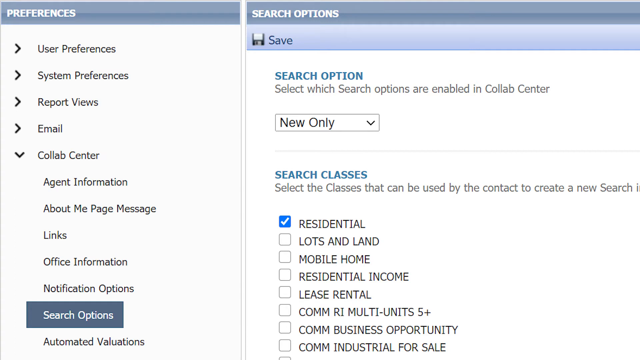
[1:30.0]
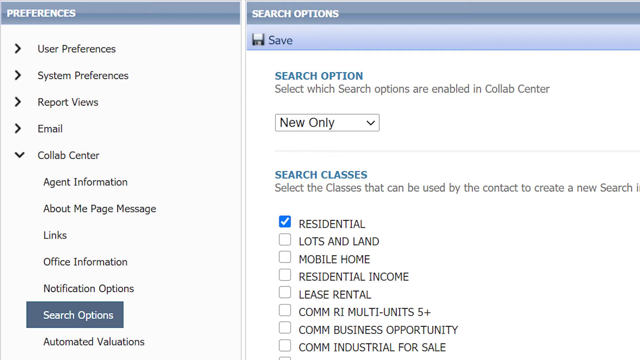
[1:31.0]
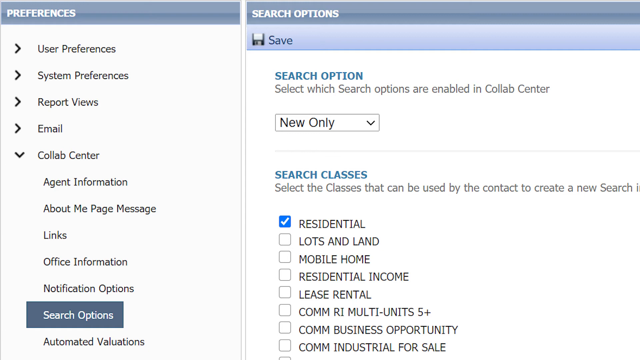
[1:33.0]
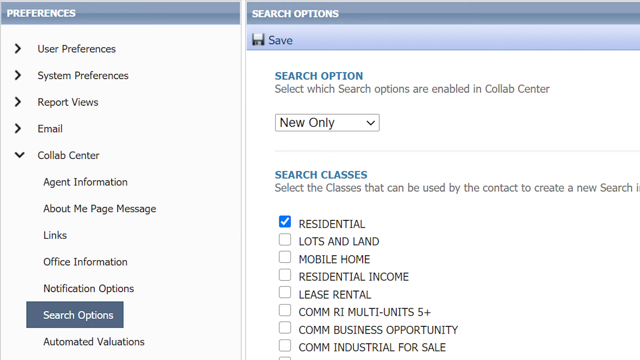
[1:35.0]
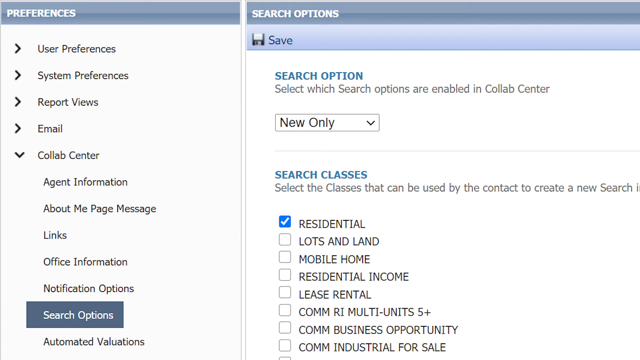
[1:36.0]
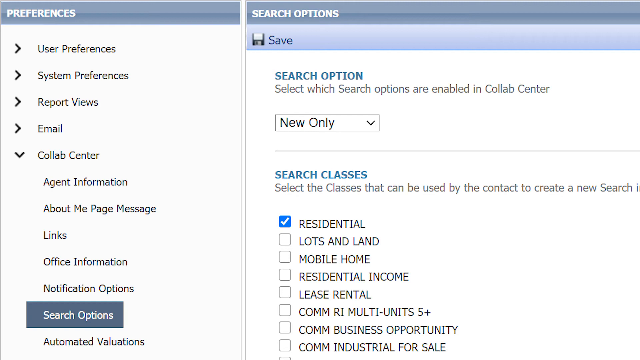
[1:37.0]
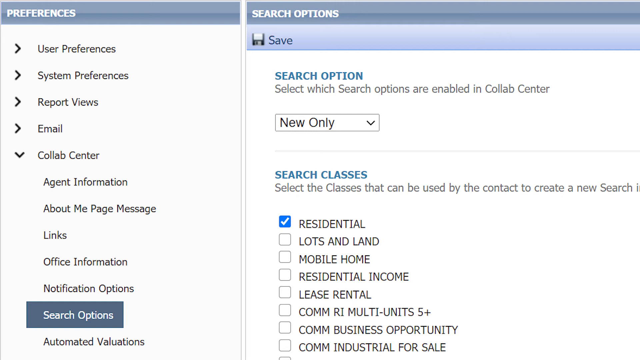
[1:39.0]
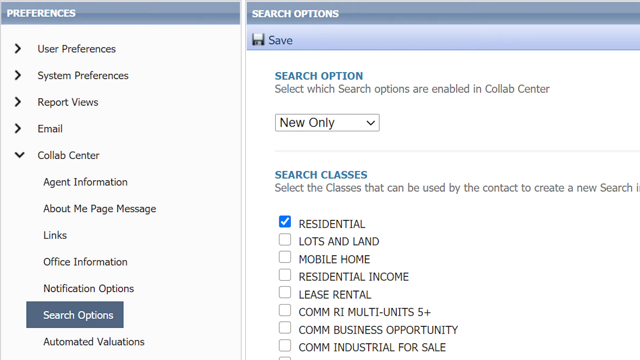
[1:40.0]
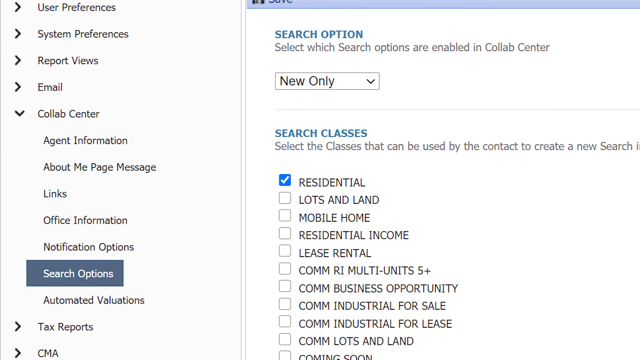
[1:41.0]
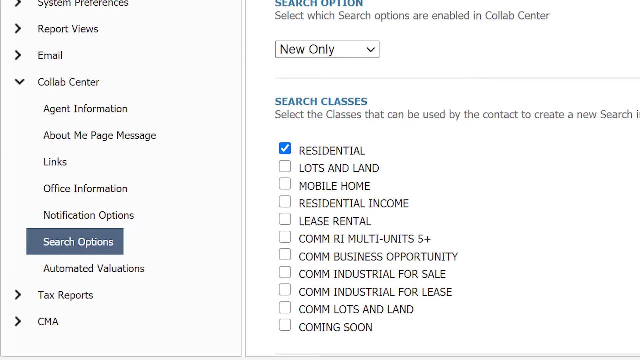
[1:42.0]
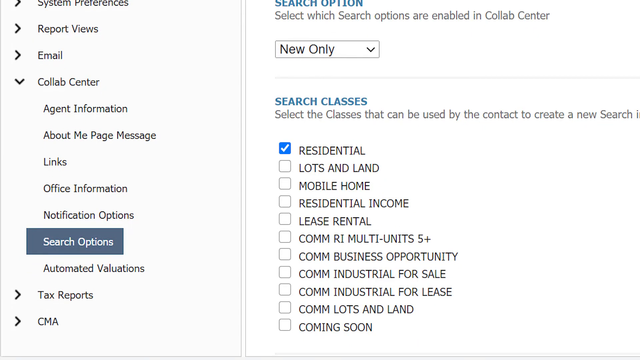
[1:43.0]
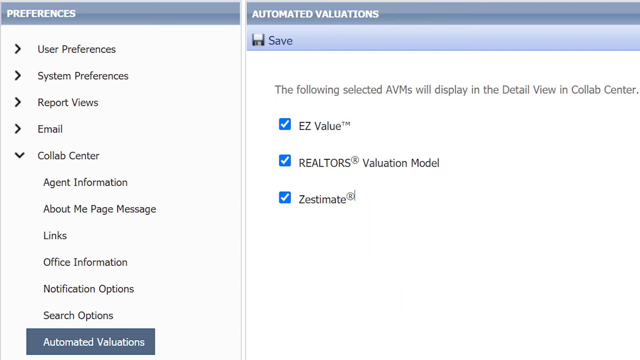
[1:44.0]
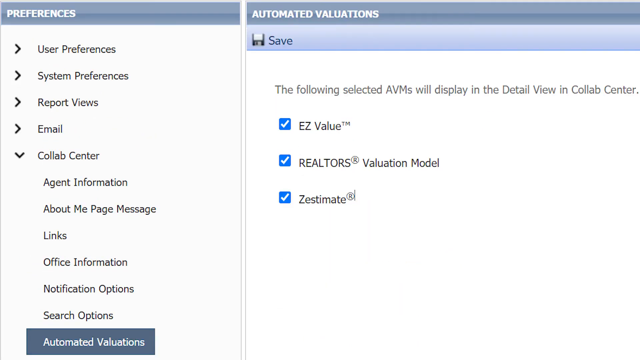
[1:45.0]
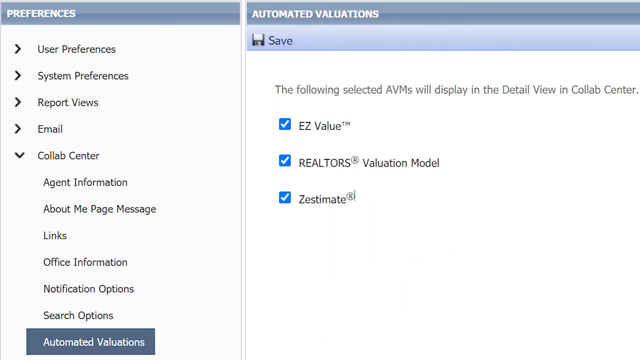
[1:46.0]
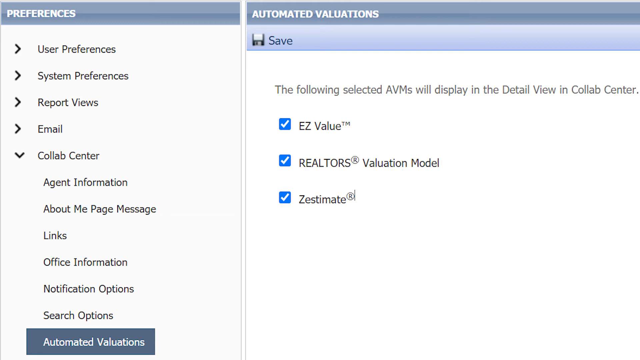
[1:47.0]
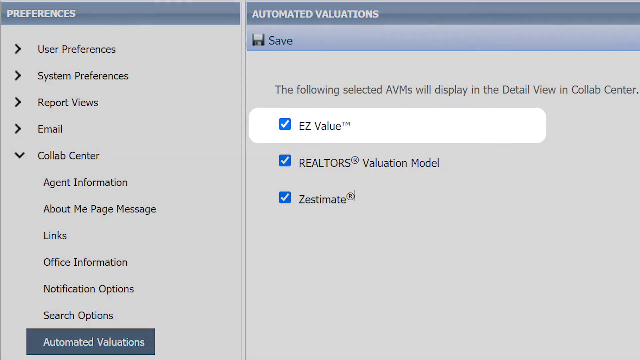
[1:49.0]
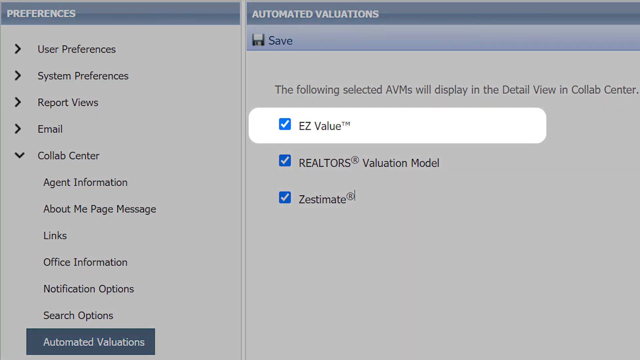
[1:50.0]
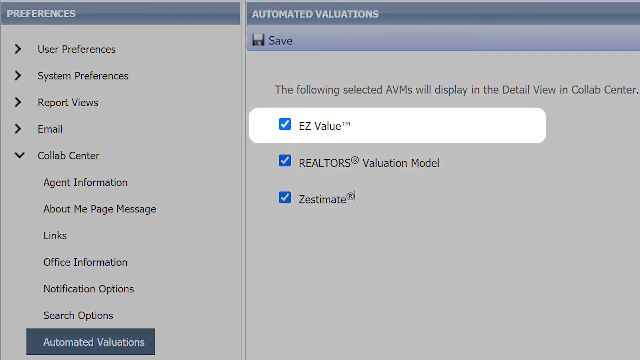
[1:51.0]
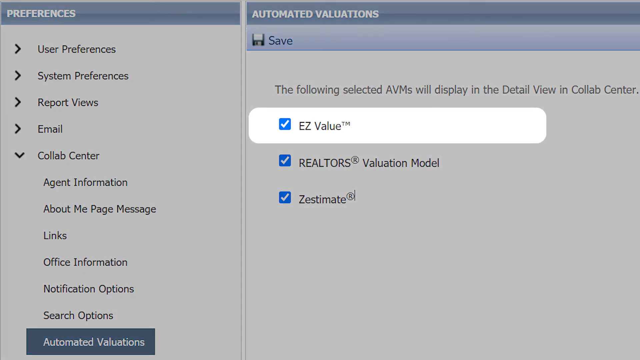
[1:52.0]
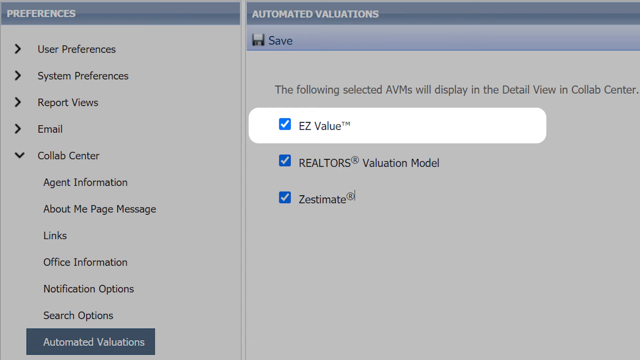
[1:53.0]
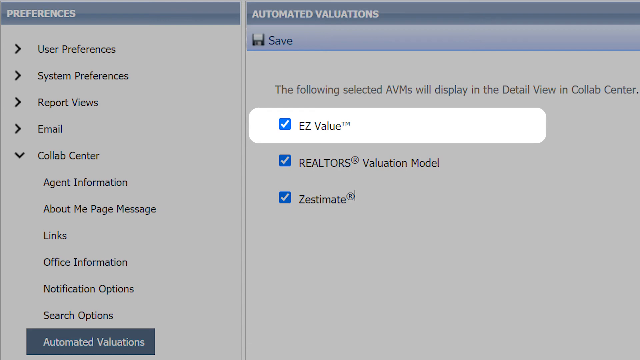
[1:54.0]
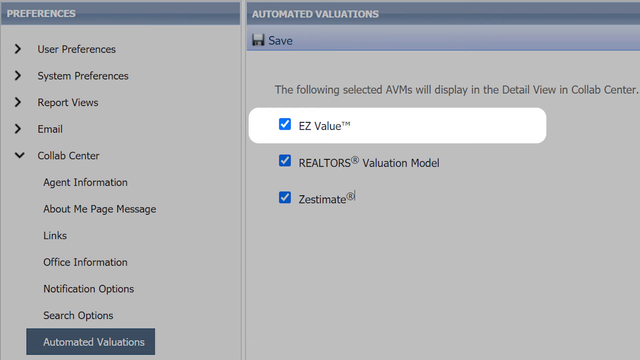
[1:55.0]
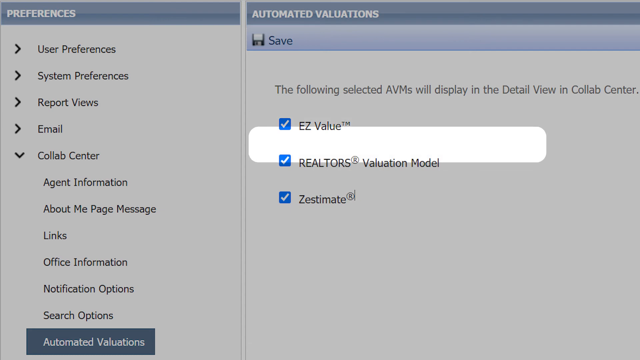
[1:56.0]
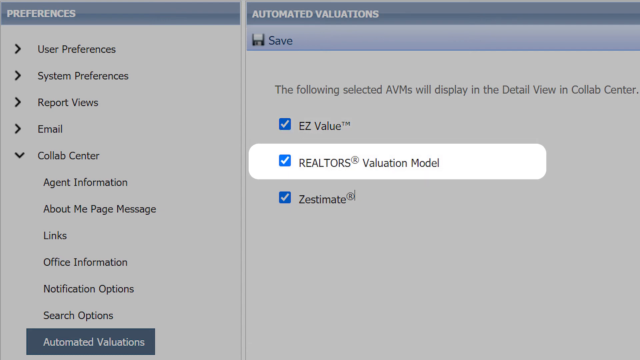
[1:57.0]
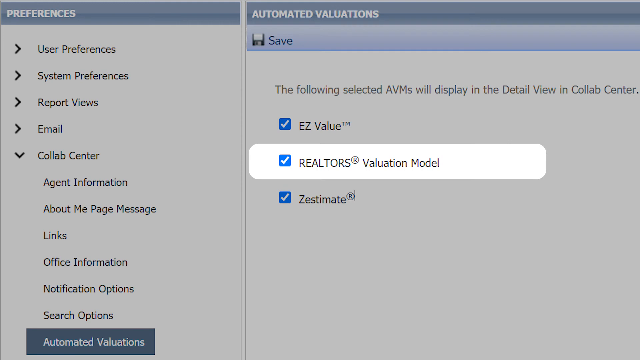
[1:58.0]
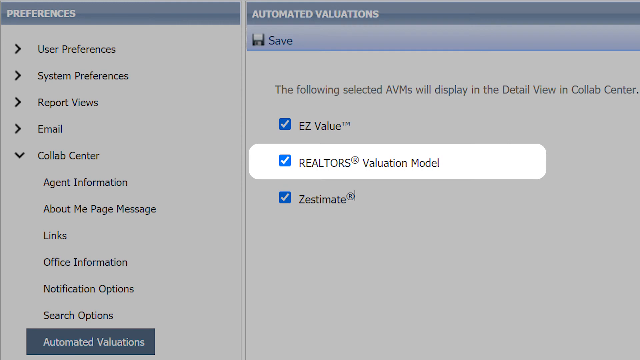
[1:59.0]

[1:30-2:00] On the search option page, a drop-down box is set to new only, and under search classes only the residential option is checked. Other options such as lots and lands, mobile home, residential income, lease, rental, and some business options are unchecked. The user scrolls down a little to more options without clicking anything. They apparently then click automated valuations, which lists easy value, retailers valuation model, and Zestmate, with easy value and Zestmate checked. Nothing has been saved yet. The entire screen becomes grayed out. The retailers valuation model is highlighted, and then each individual option in the automated valuations tab is highlighted in turn.